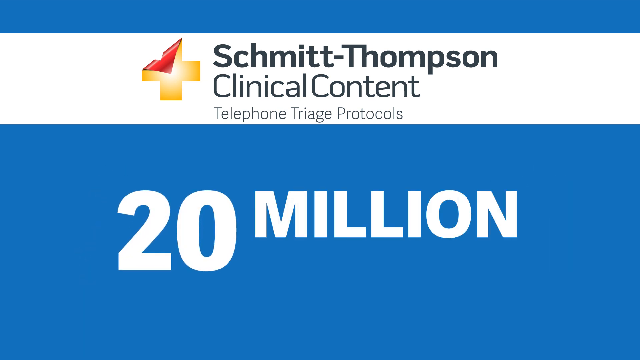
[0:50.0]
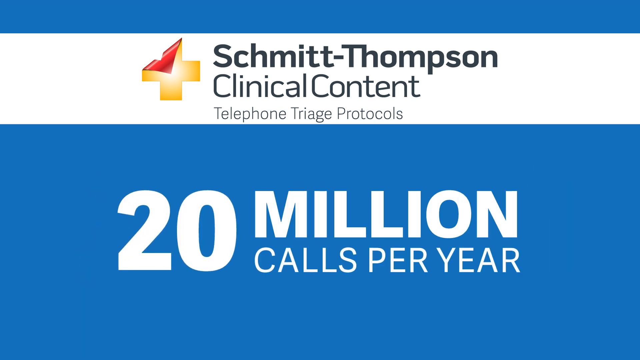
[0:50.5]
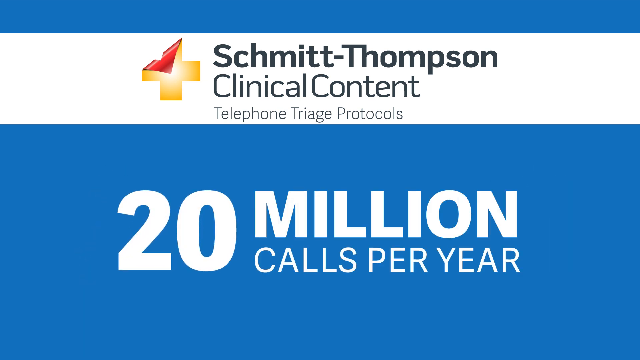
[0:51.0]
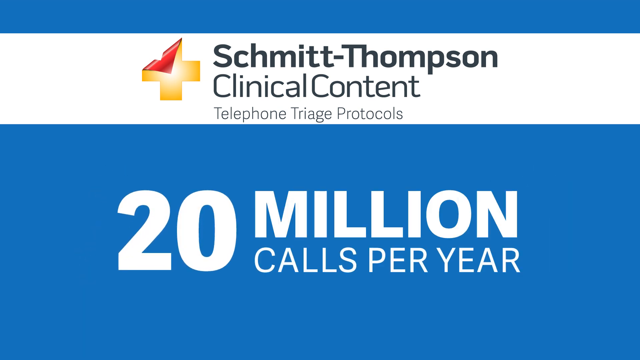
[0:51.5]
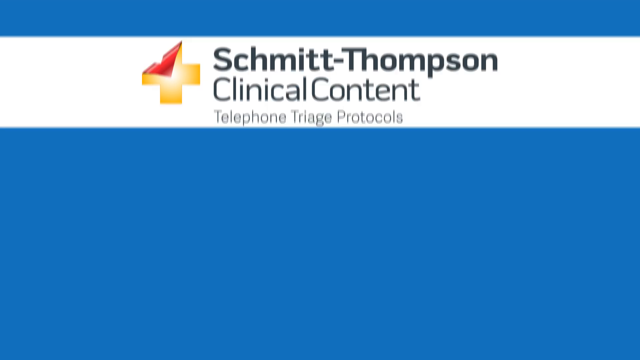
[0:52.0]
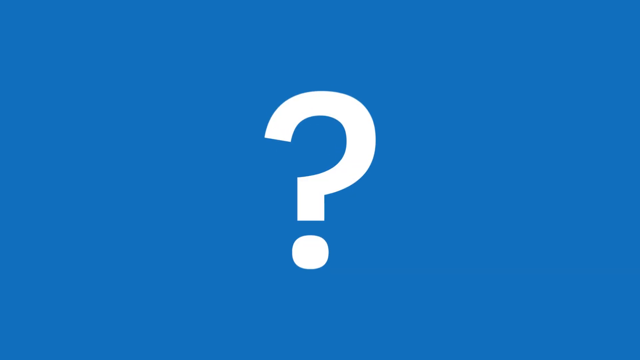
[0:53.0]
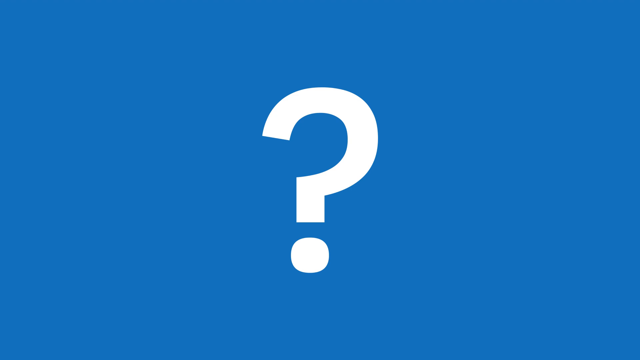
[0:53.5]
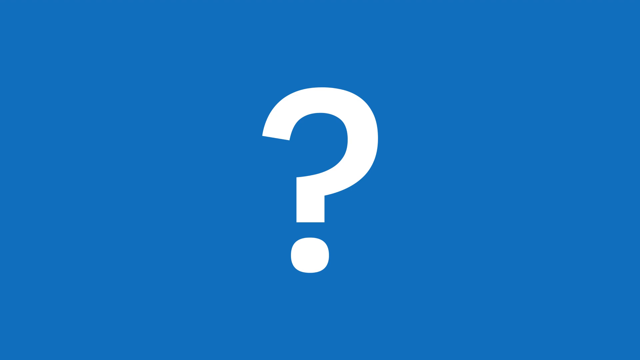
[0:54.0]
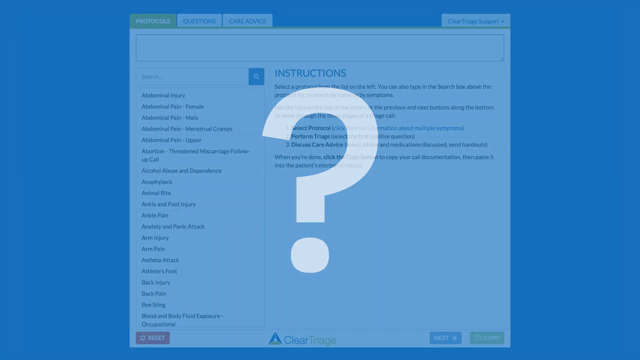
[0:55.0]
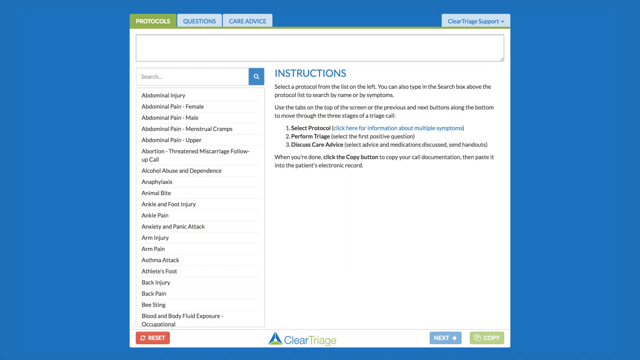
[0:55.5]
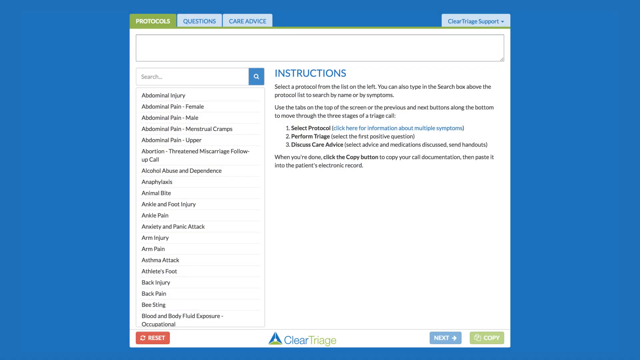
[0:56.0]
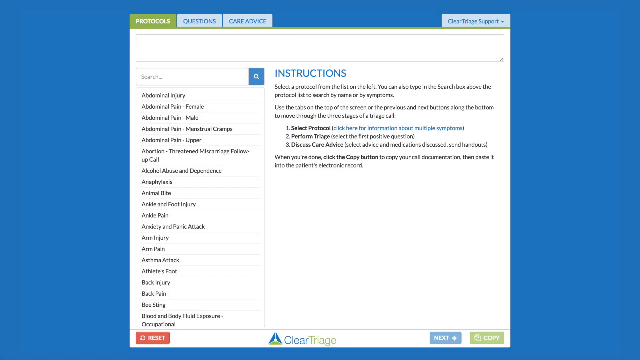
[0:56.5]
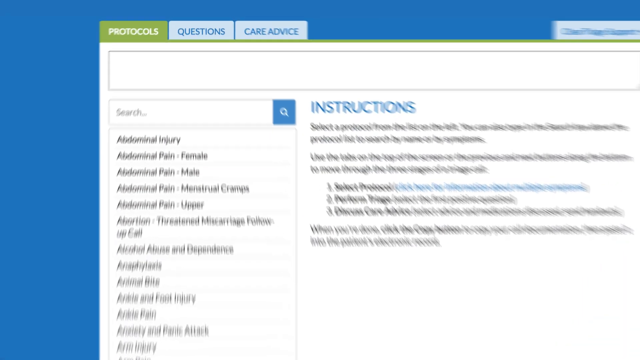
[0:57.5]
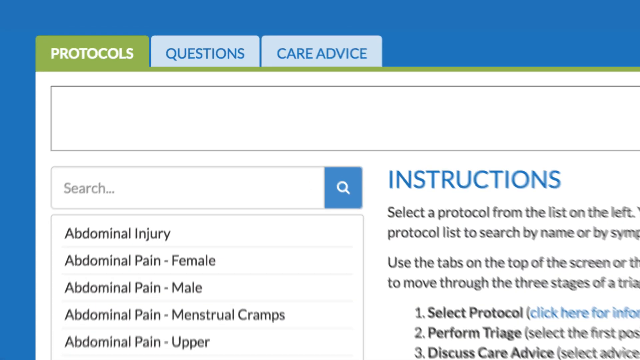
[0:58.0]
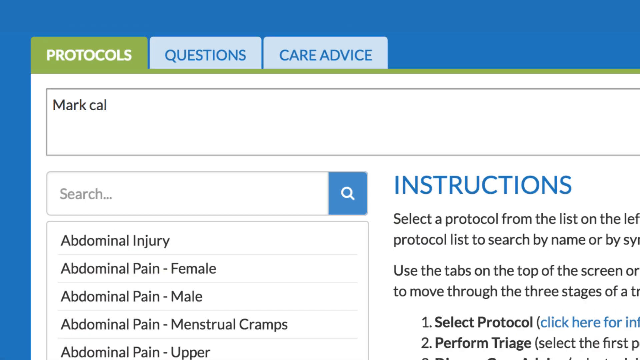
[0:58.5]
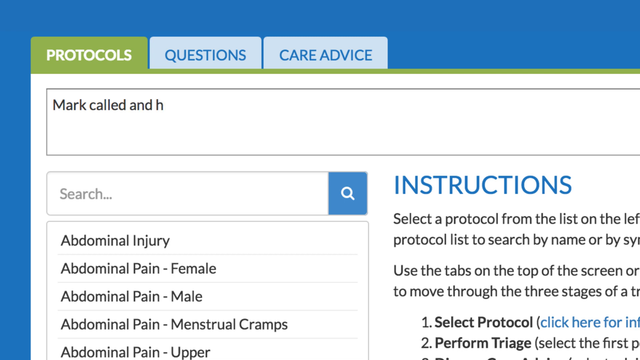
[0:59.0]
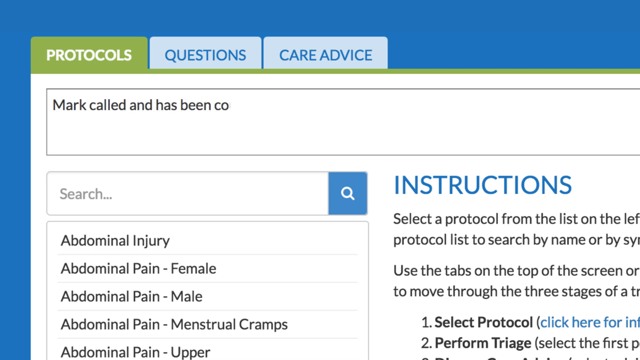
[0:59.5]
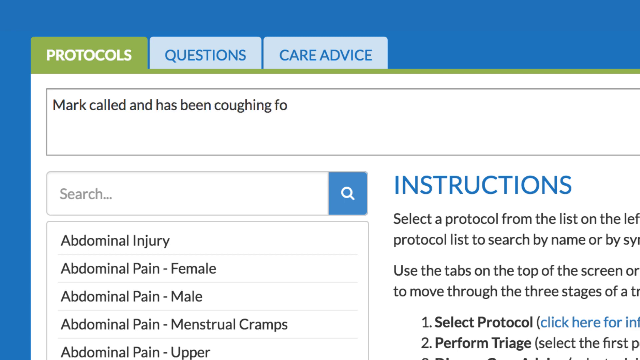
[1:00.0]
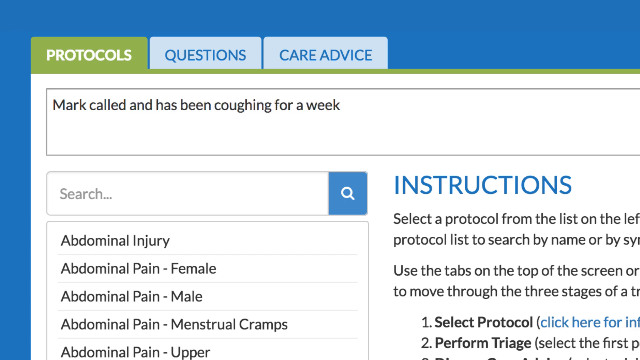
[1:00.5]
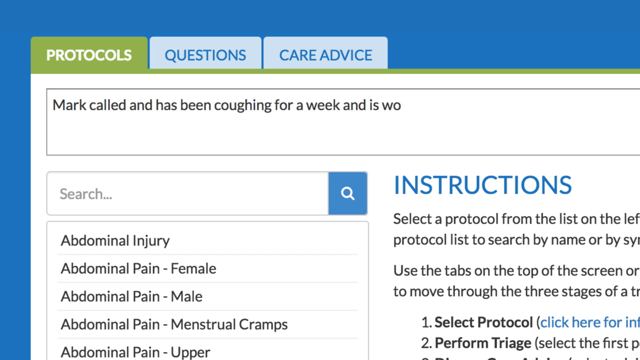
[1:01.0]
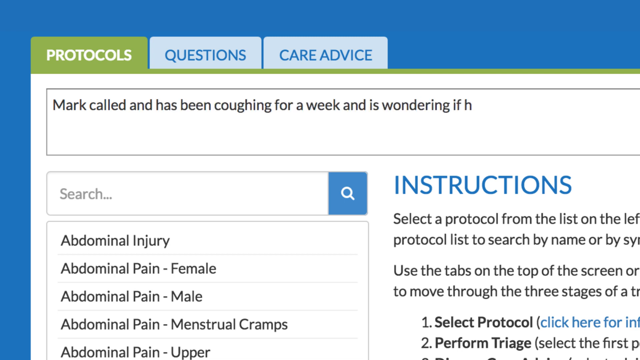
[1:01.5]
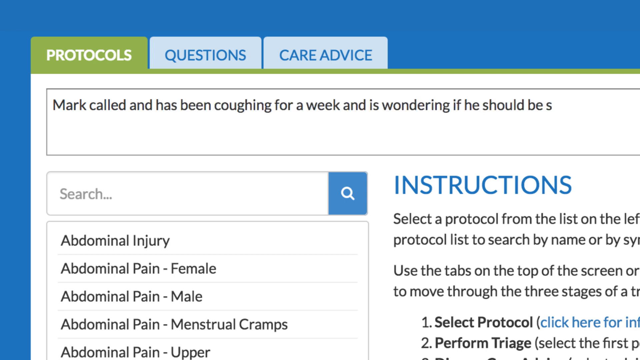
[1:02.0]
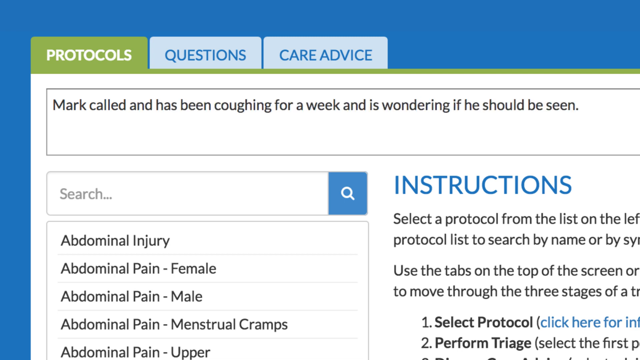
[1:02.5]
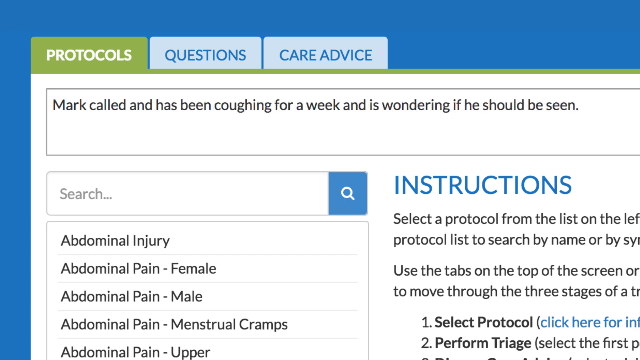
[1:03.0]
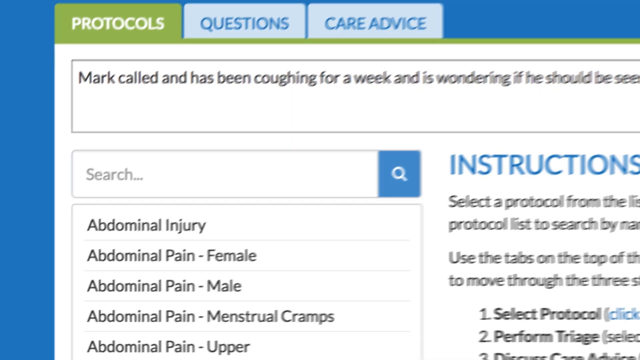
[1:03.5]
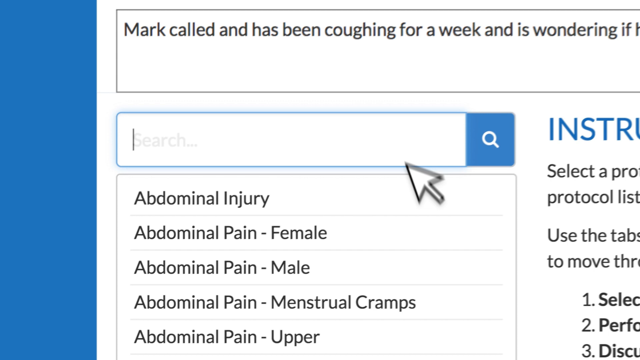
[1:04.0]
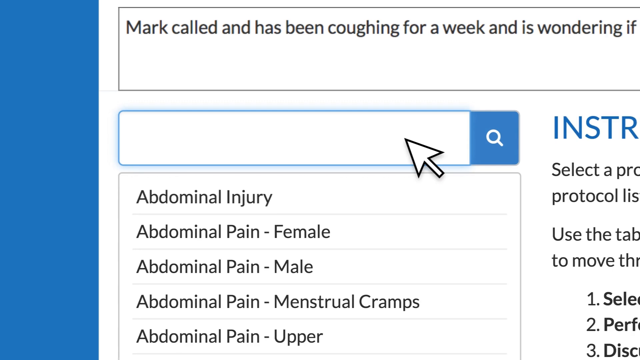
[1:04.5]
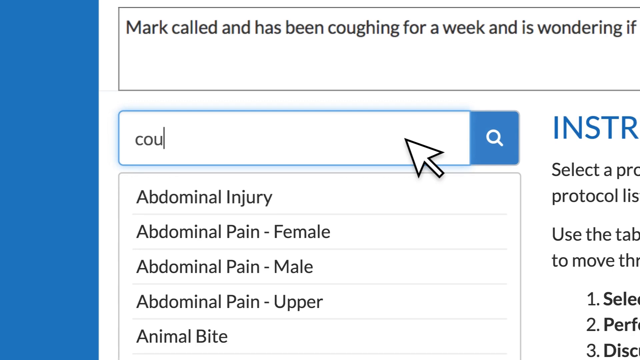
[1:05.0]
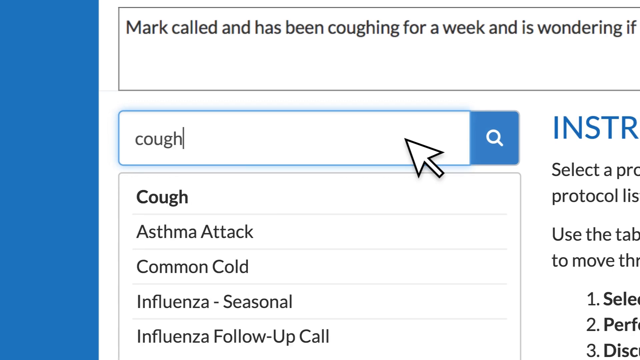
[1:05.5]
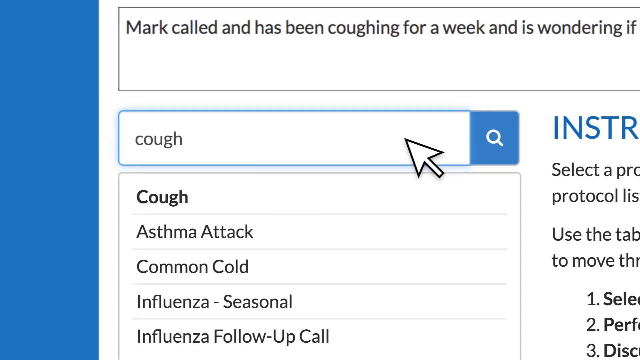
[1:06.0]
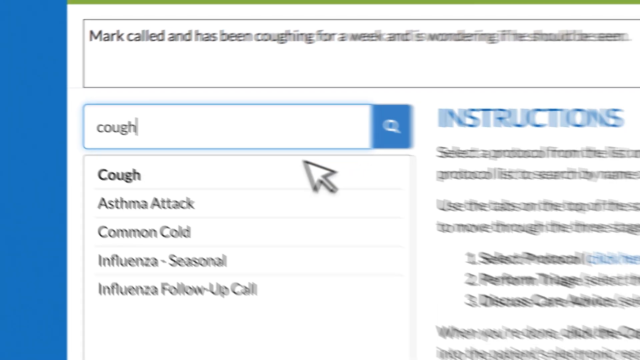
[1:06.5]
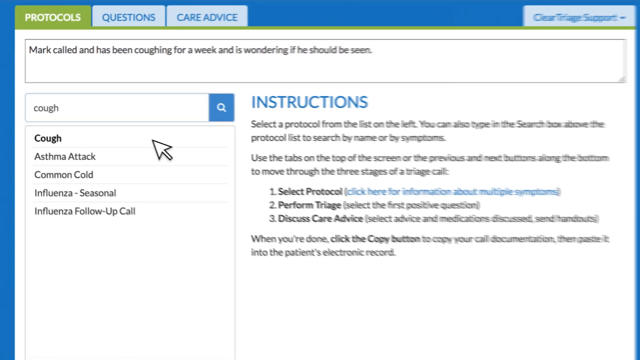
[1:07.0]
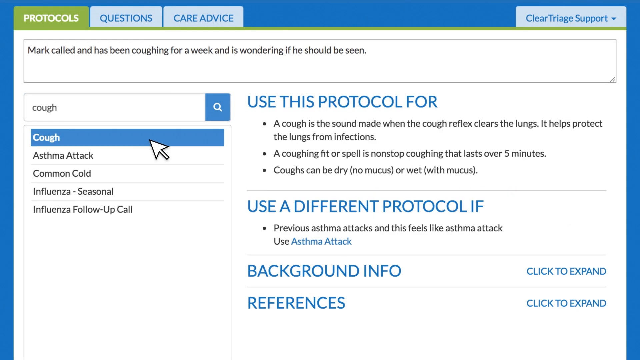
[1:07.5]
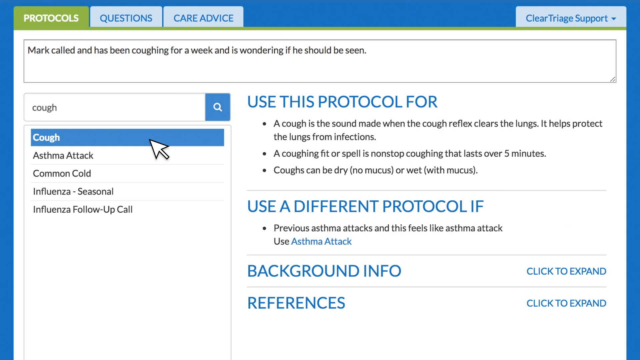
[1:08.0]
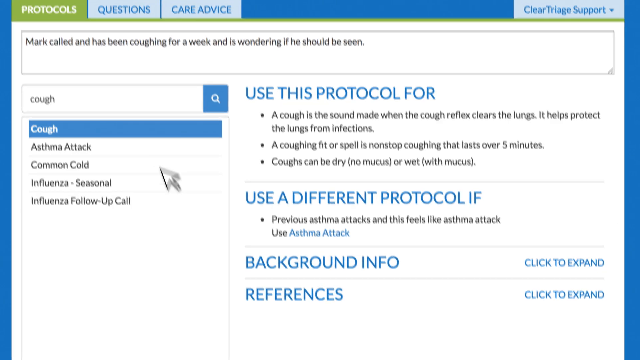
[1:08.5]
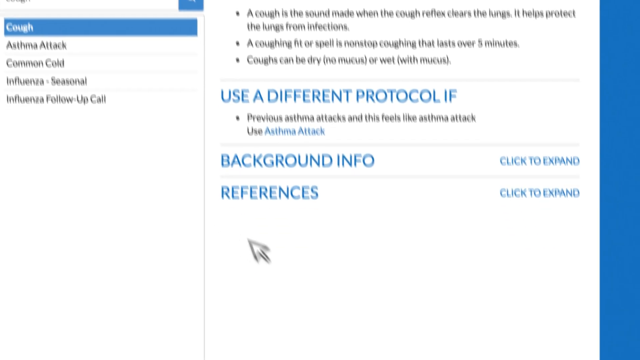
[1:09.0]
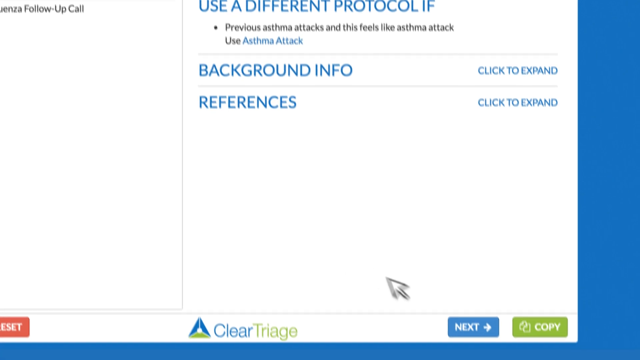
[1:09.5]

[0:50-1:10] A blue screen has a white line across the top, on which black letters read "Schmidt-Thompson", with "clinical content" below it and "telephone triage protocols" below that. To the left is a yellow cross with a white center; its top left corner is folded down toward the center like a piece of paper, showing red on the back. Below, on the blue, "20 million" appears in white letters and numbers. Words beginning with "call" appear, followed by a white question mark. Then a screen that looks like a website appears, with tabs at the top labeled "protocols", "questions" and "care advice"; "protocols" is selected and is in white letters. Below, someone types "Mark called and has been coughing for a week and is wondering if he should be seen". In the search, "cough" is entered and appears; an arrow clicks on it, then moves down to a blue button and clicks it.